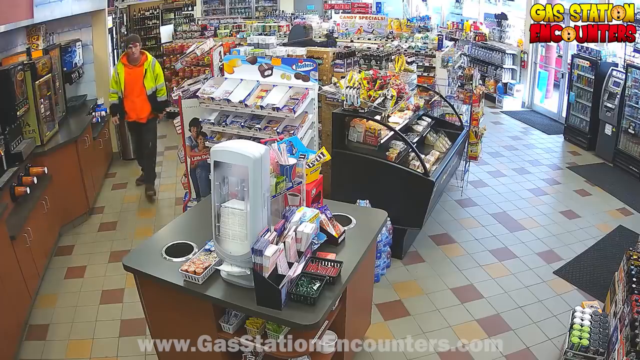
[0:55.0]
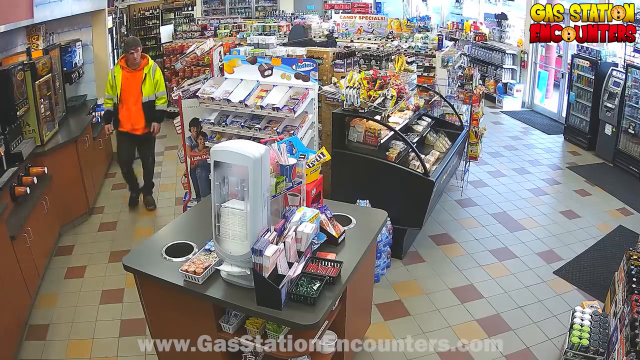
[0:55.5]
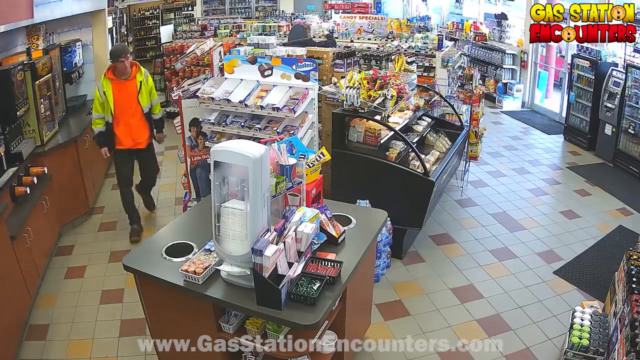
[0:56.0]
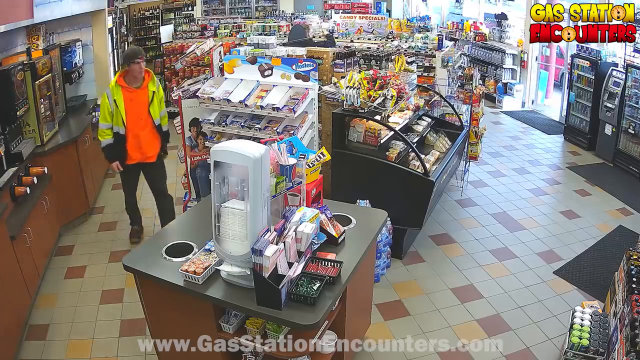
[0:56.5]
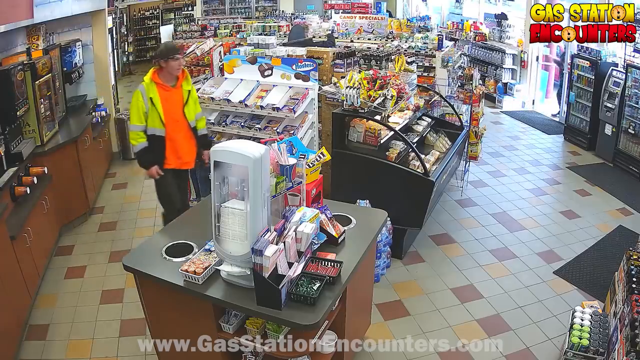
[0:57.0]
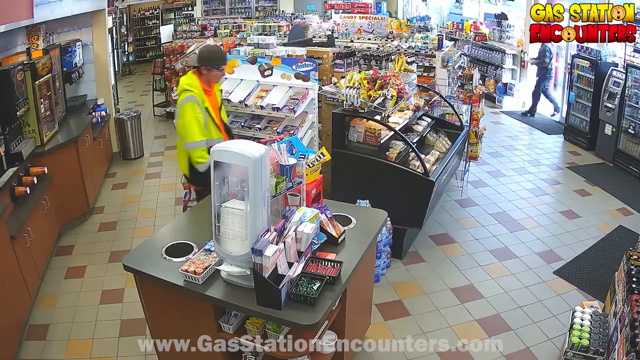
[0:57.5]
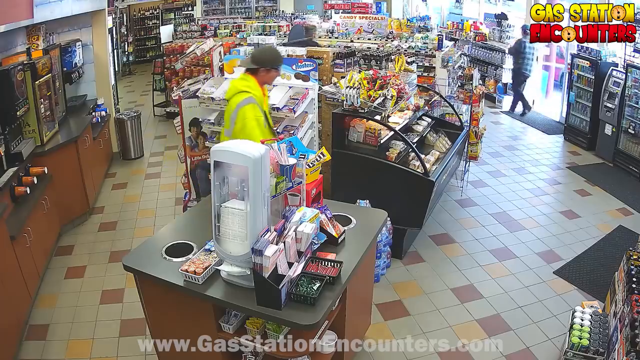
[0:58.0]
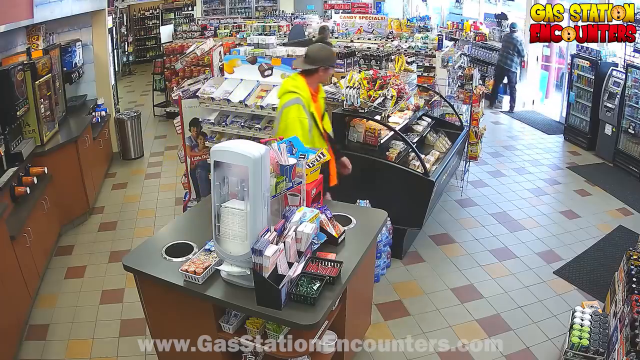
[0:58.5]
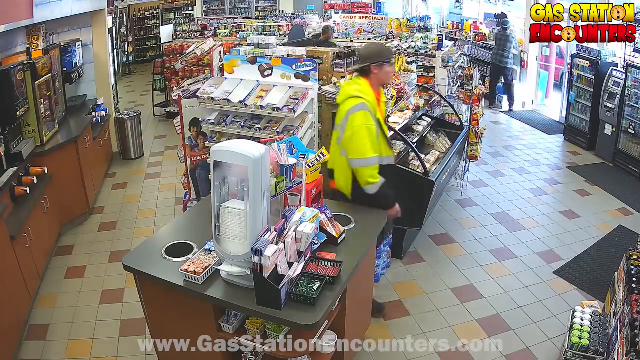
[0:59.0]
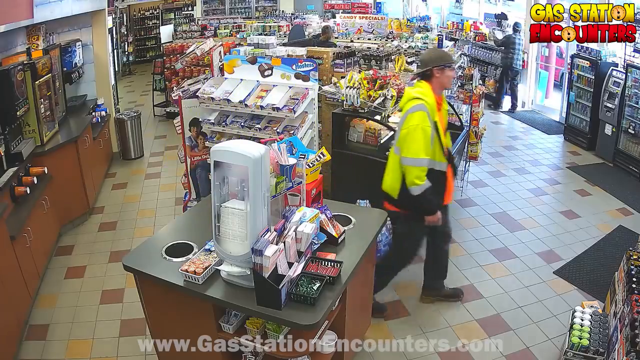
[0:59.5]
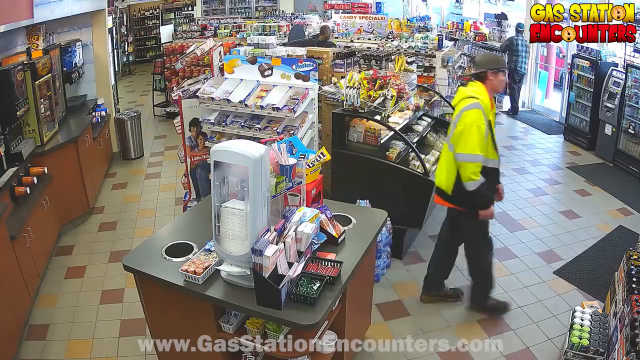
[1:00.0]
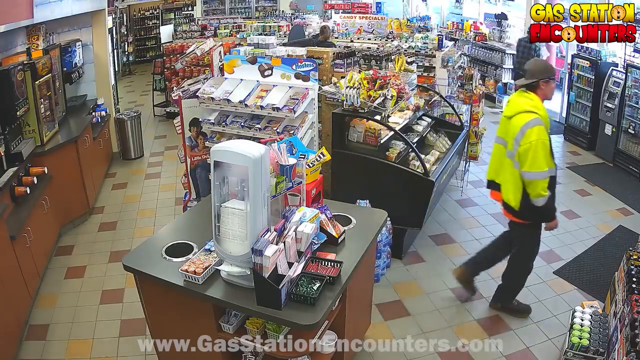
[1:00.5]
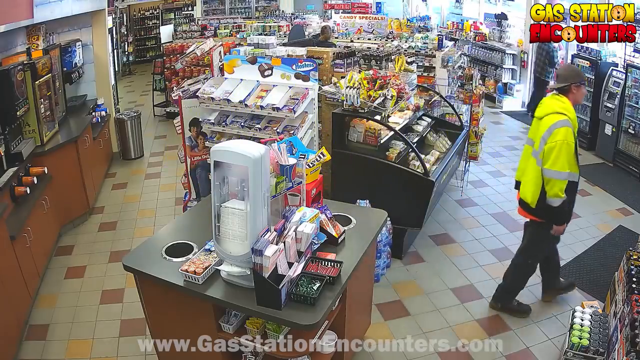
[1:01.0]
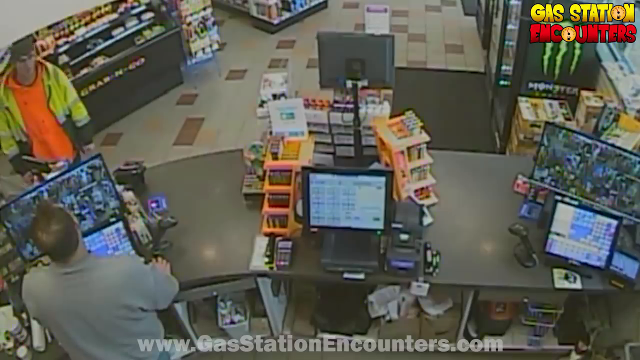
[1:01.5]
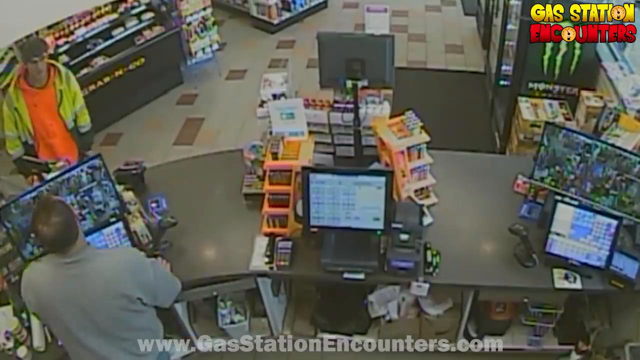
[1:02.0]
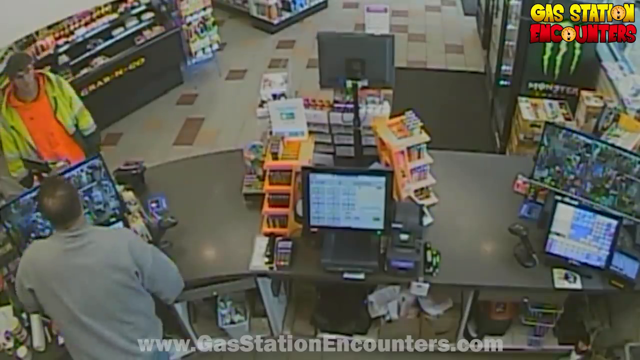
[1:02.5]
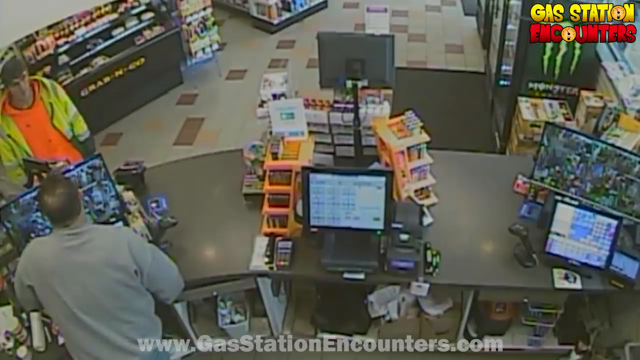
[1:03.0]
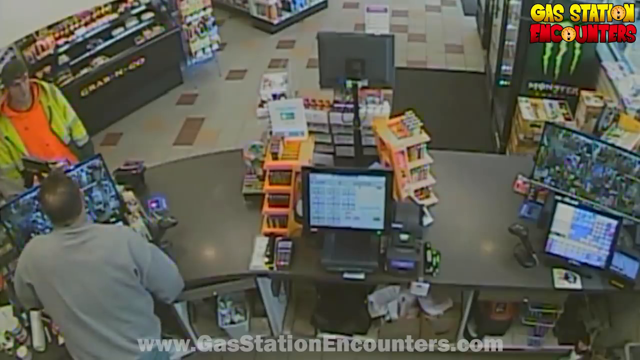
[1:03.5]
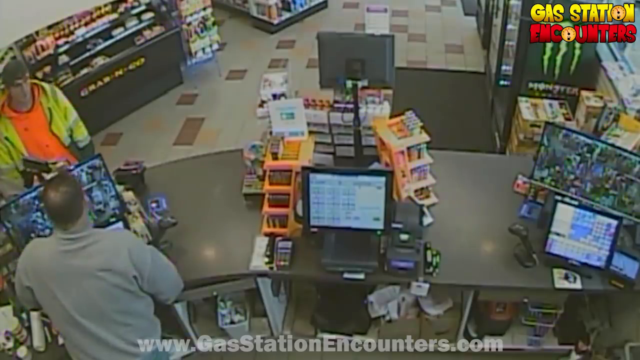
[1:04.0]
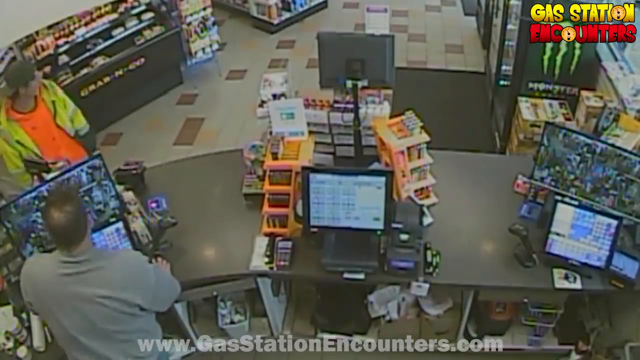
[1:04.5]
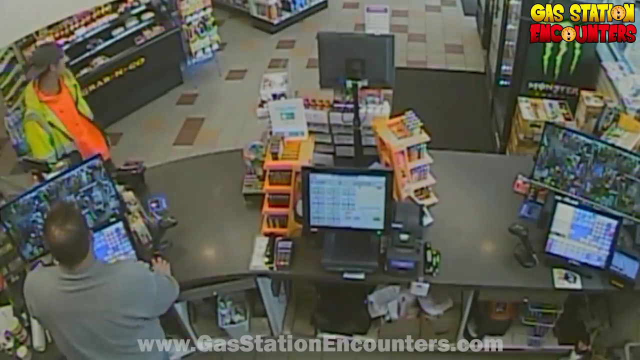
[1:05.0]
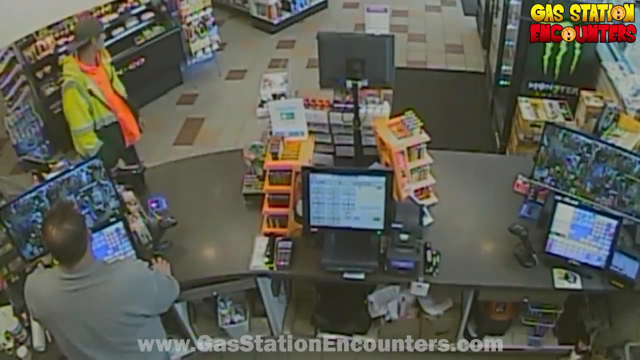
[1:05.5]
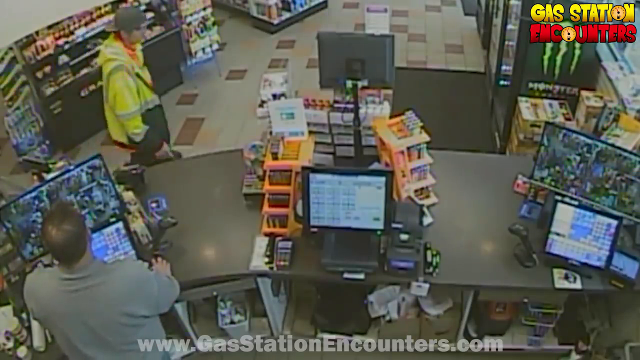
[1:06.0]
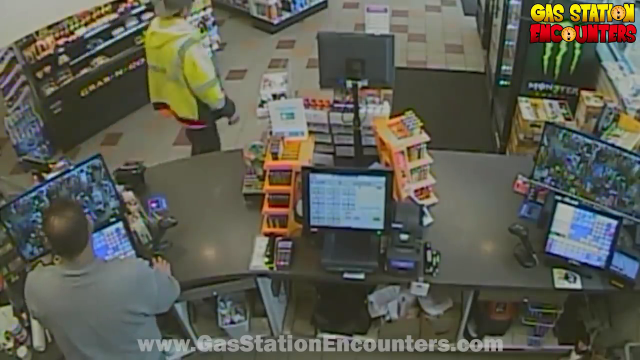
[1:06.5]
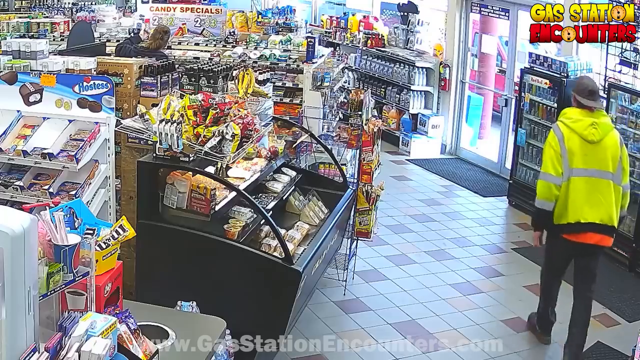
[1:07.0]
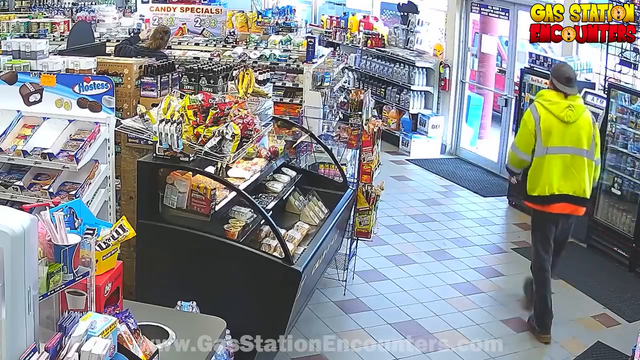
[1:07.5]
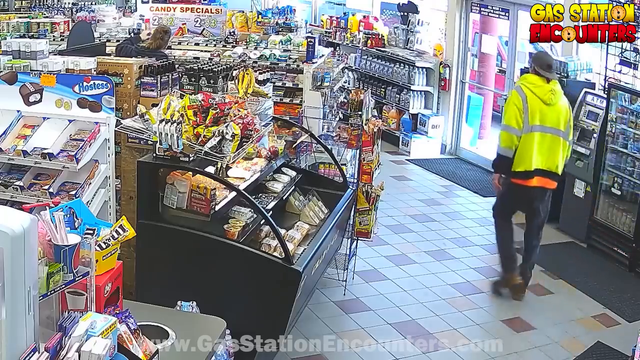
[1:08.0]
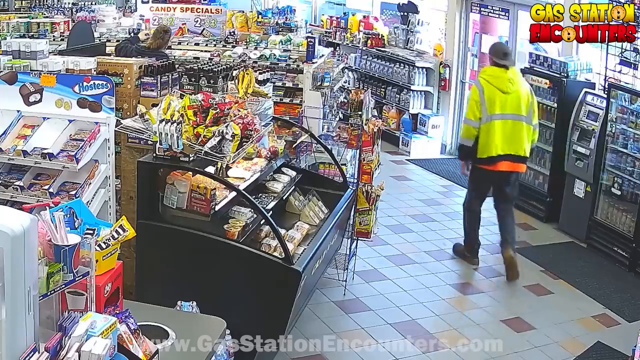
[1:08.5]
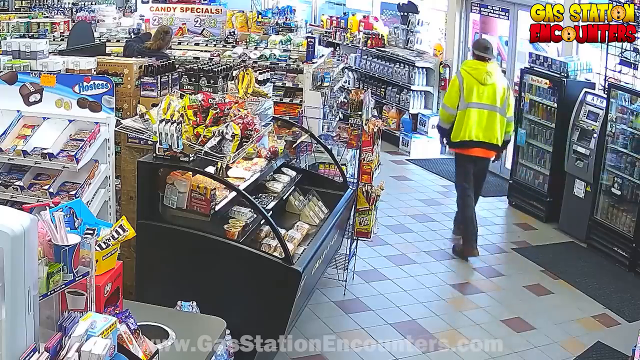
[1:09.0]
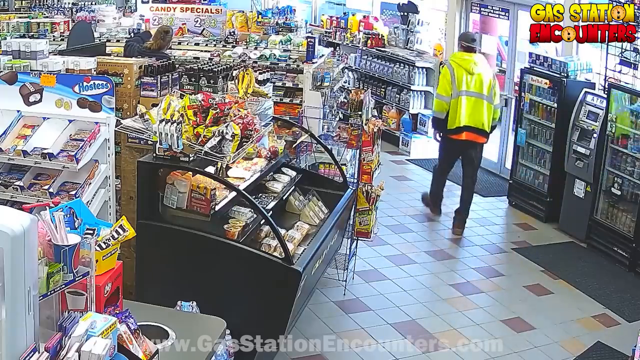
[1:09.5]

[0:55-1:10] The man in the yellow jacket walks down part of the gas station. On the left is a coffee section on a black countertop with brown cabinets underneath, and to the left of that are three different-sized cup displays arranged horizontally on the countertop. The man makes a left turn and is seen from a side angle starting to walk downward. At the end of that shot, someone appears to be exiting the gas station. The next shot shows the man in the yellow jacket in front of the counter, with the gas station worker behind the counter, seen from behind, wearing a gray shirt. The countertop is black and has three computer screens; the attendant is at the one on the left. The man in the yellow jacket walks away from the counter. A new camera shot shows him from behind, walking away.